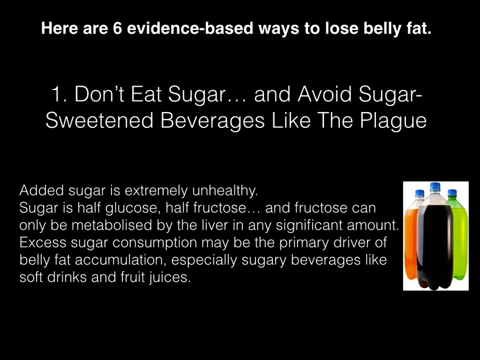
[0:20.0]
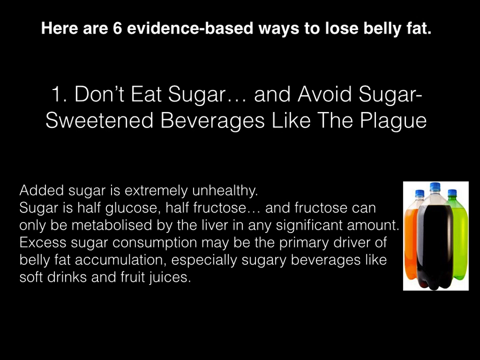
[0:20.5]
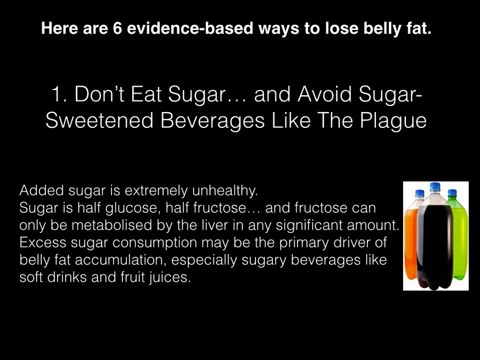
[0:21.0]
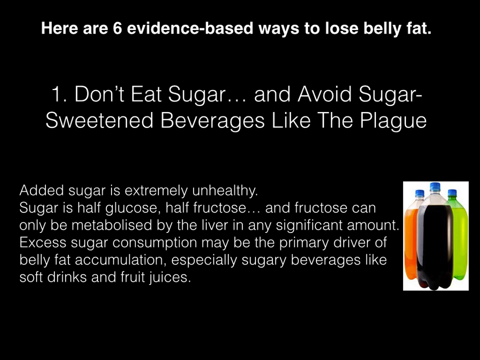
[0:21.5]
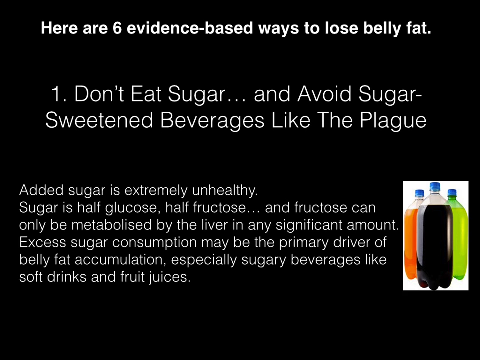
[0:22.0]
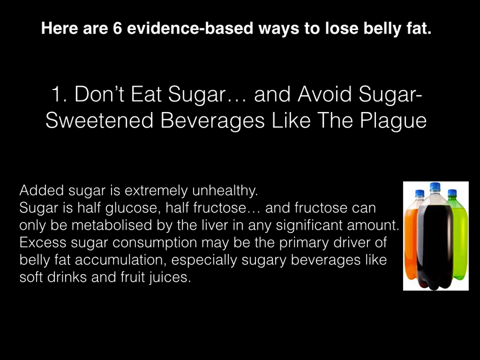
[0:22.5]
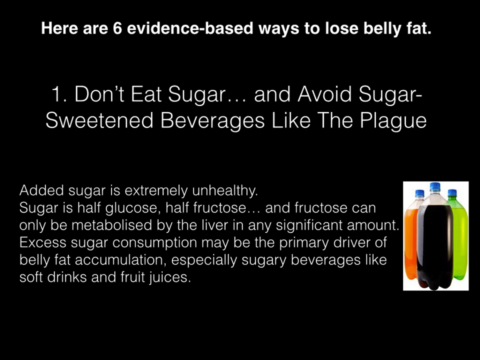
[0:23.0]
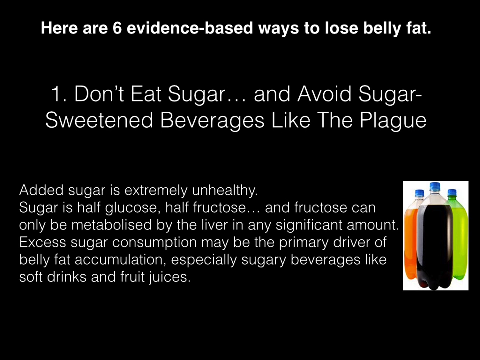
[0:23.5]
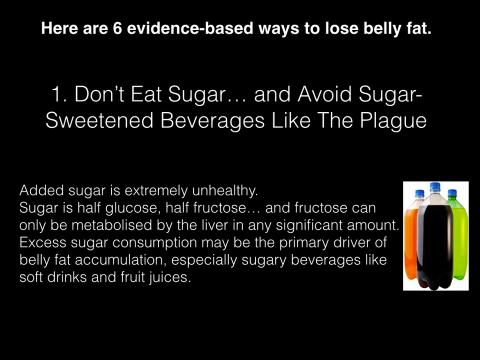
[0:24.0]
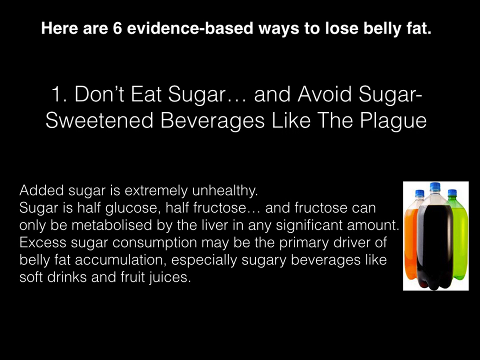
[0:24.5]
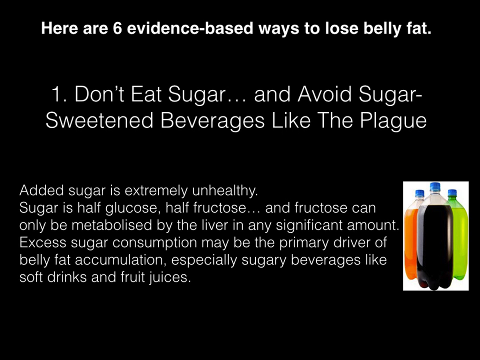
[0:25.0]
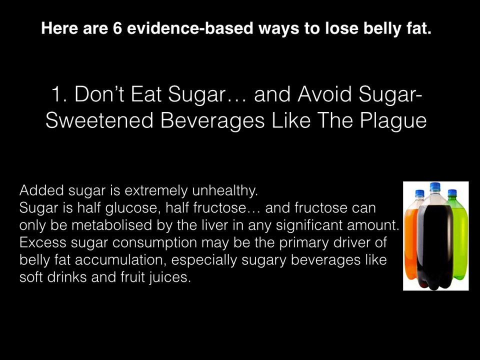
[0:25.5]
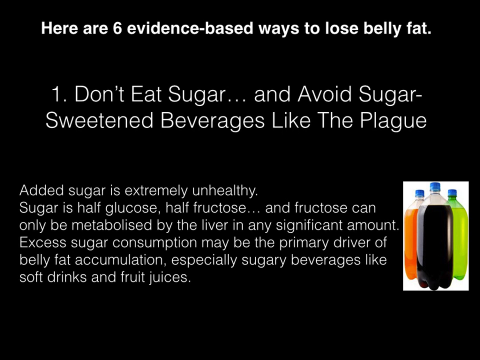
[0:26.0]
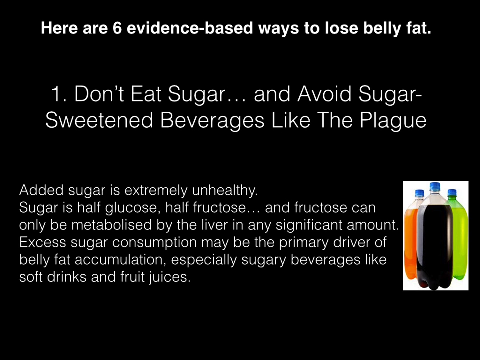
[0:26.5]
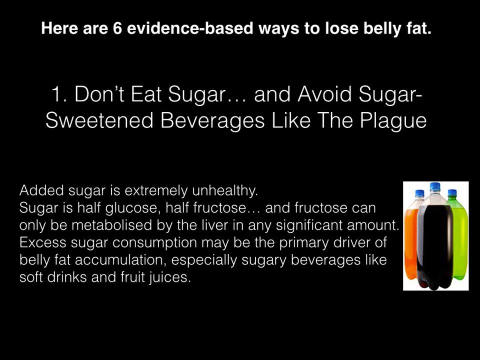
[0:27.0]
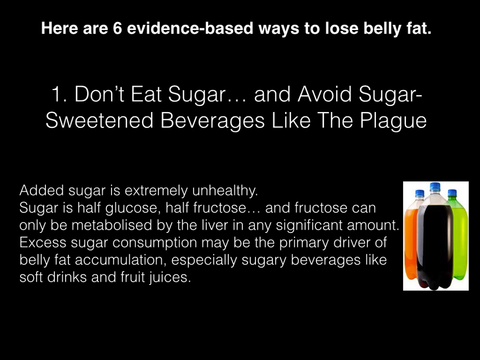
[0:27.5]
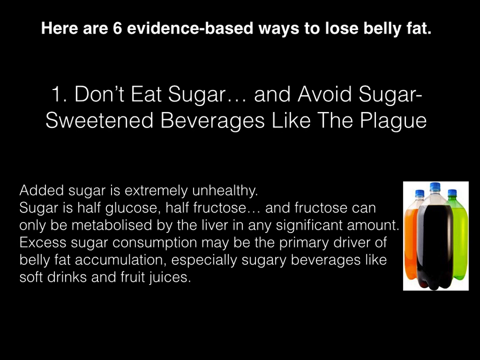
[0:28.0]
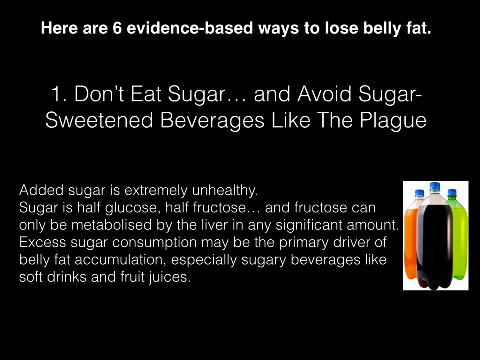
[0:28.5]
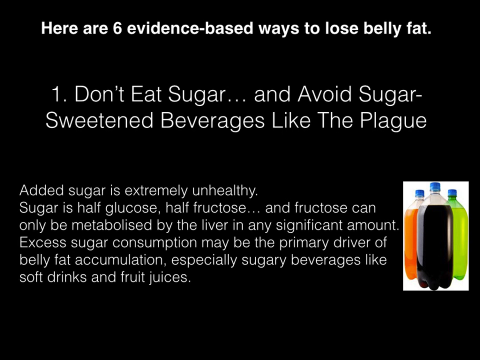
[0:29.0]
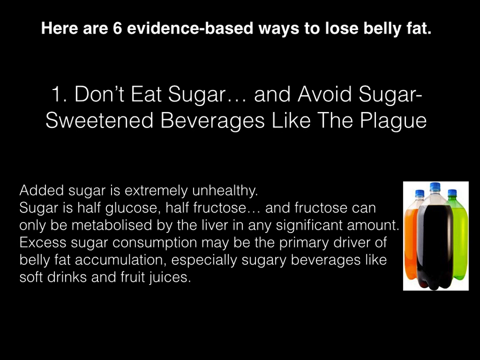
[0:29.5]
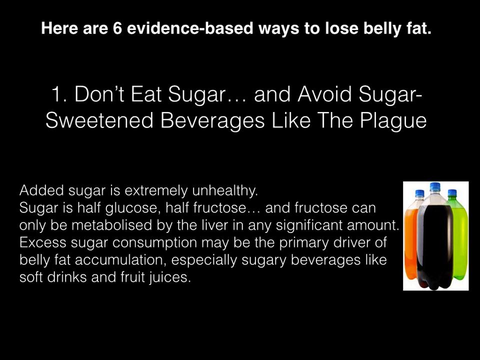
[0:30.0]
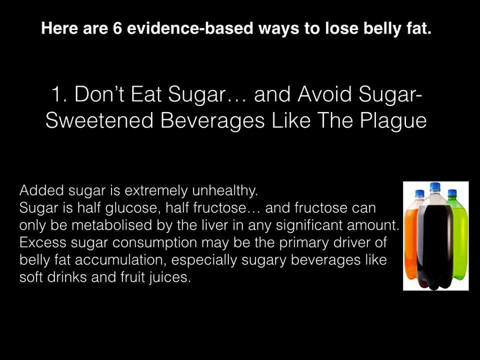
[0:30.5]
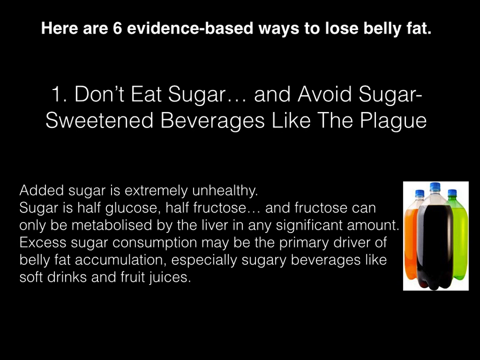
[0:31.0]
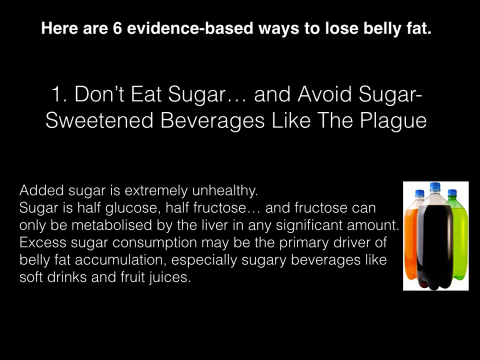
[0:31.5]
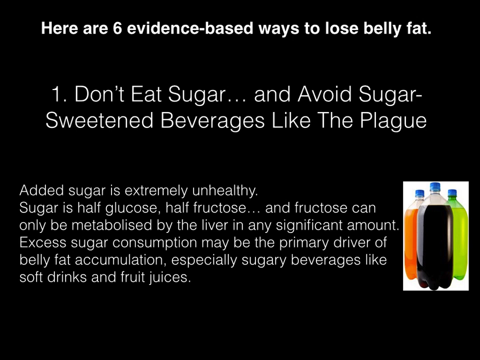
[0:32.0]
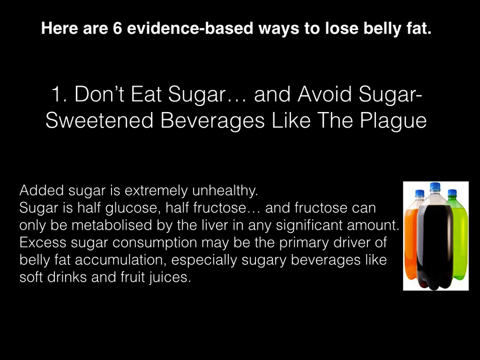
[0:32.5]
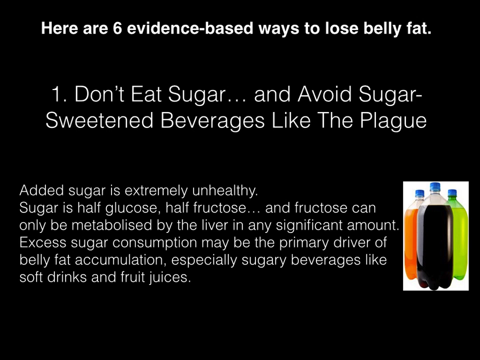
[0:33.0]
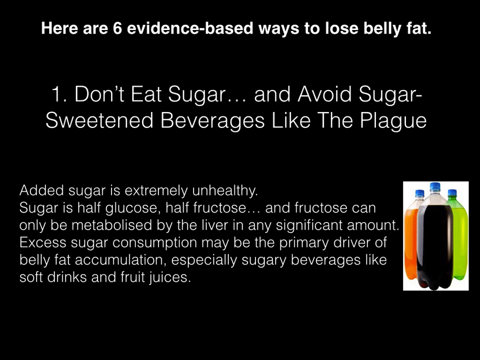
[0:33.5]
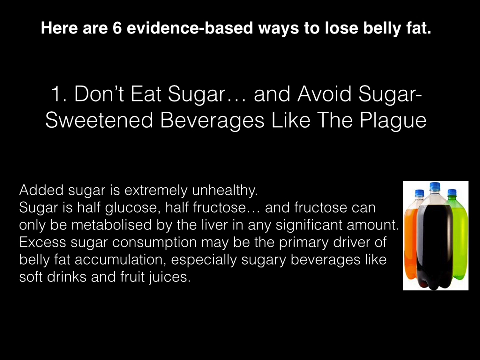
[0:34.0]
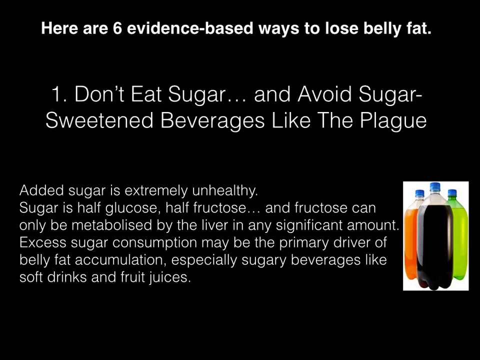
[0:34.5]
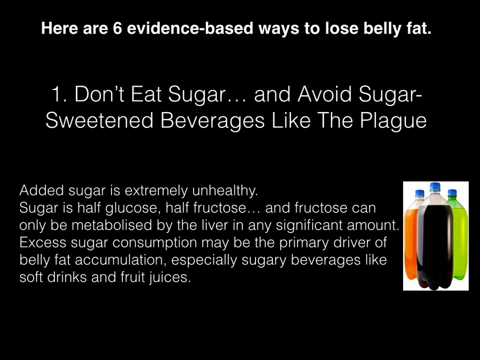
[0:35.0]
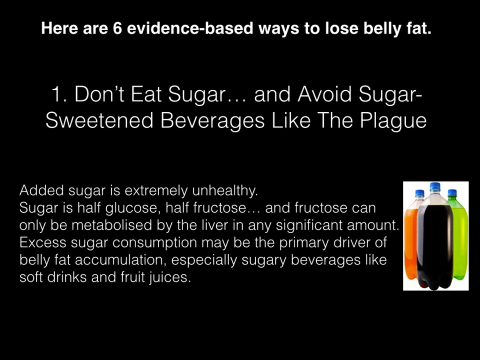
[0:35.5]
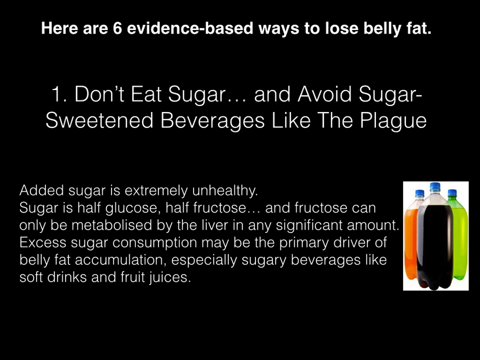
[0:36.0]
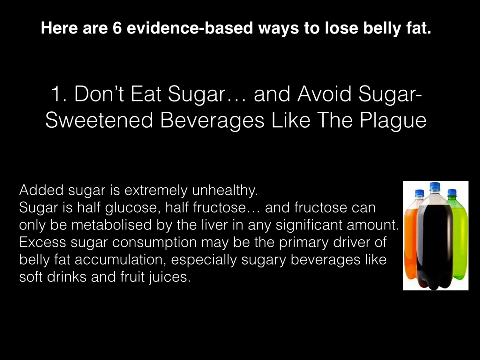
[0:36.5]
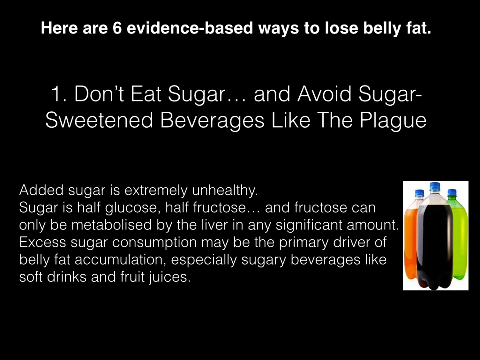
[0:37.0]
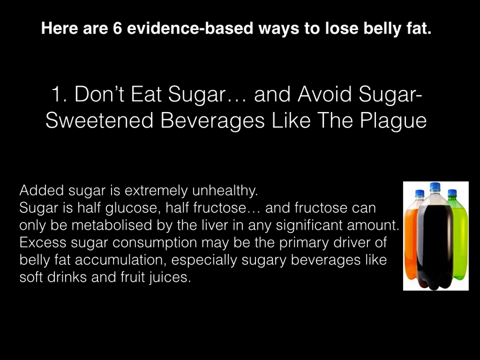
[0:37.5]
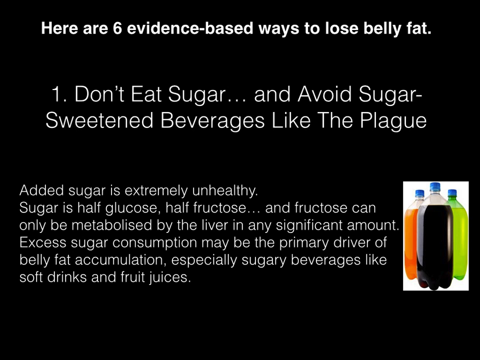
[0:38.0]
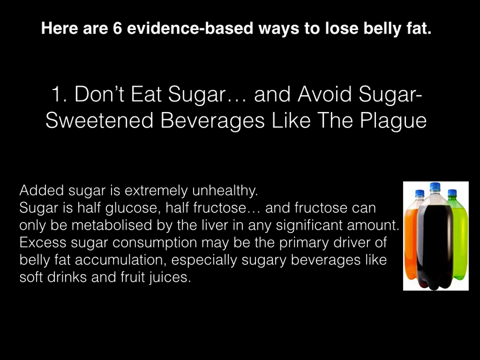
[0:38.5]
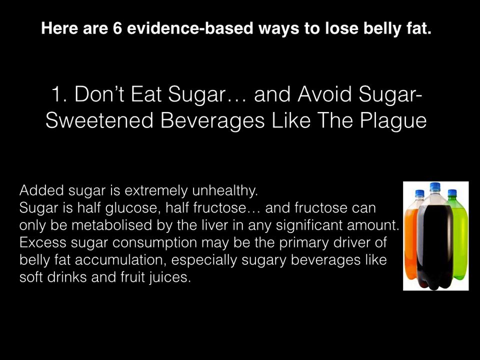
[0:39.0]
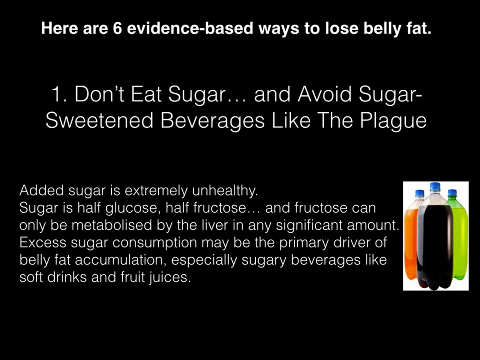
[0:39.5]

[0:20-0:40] This health and fitness video shows a slide reading "here are six evidence-based ways to lose belly fat" and "number one don't eat sugar and avoid sugar sweetened beverages like the plague." Below that is text on the left and an image of three soda bottles on the right; the bottles are orange, black and green, and each has a blue cap. The text on the left reads "added sugar is extremely unhealthy sugar is half glucose half fructose and fructose can only be metabolized by the liver in any significant amount excess sugar consumption may be the primary driver of belly fat accumulation especially sugary beverages like soft drinks and fruit juices." Everything is set against a black background, and the slide is a screenshot, so the video shows only a still image like a photo. The text is white; the top line looks bold, and the middle section looks larger in font.